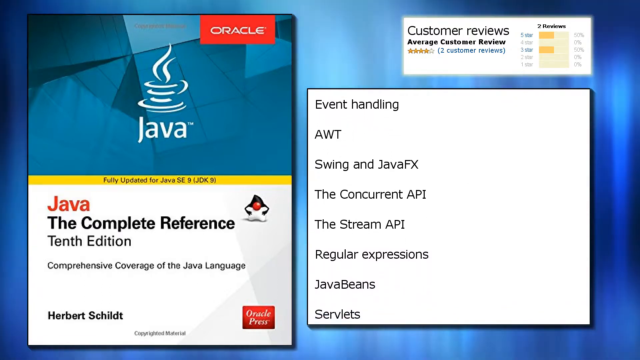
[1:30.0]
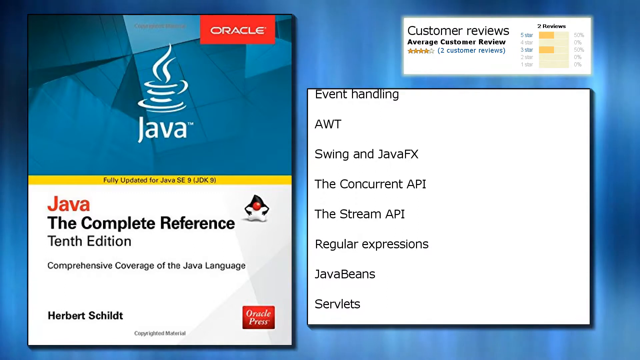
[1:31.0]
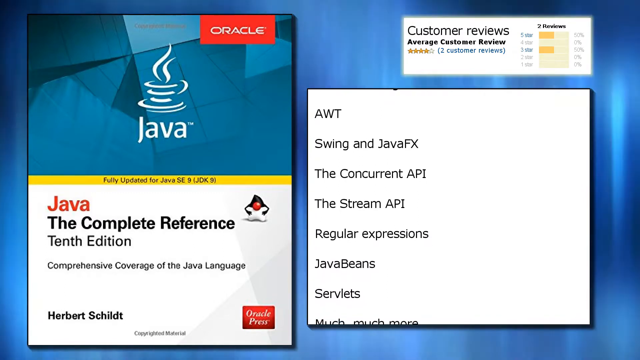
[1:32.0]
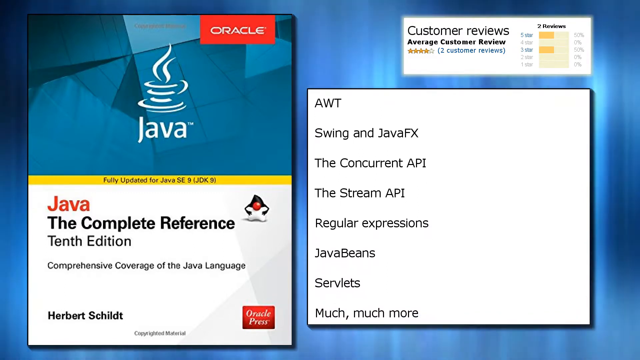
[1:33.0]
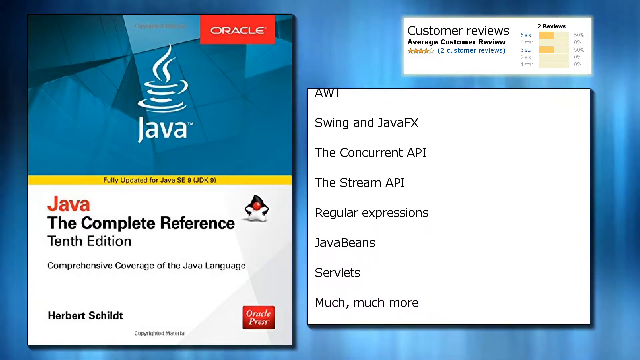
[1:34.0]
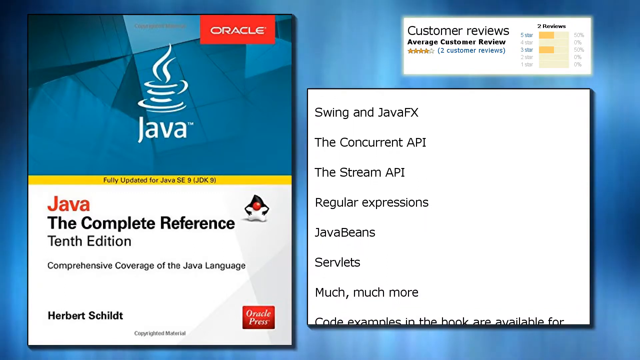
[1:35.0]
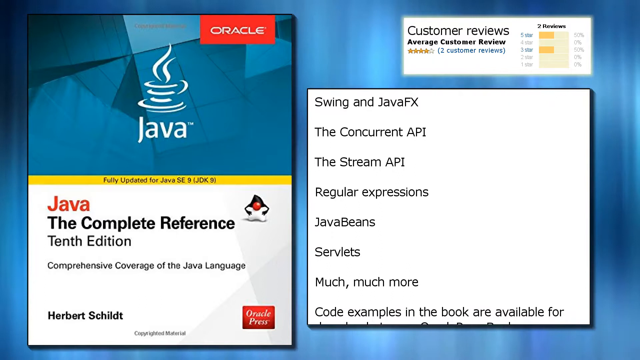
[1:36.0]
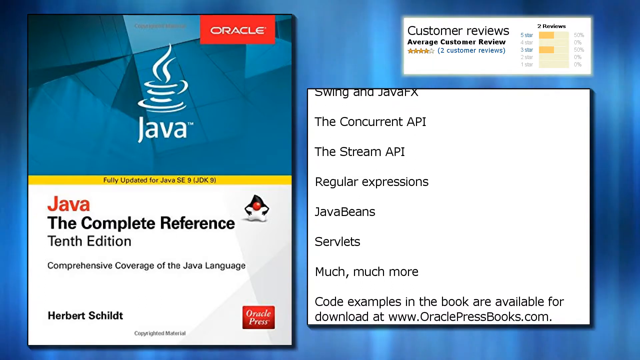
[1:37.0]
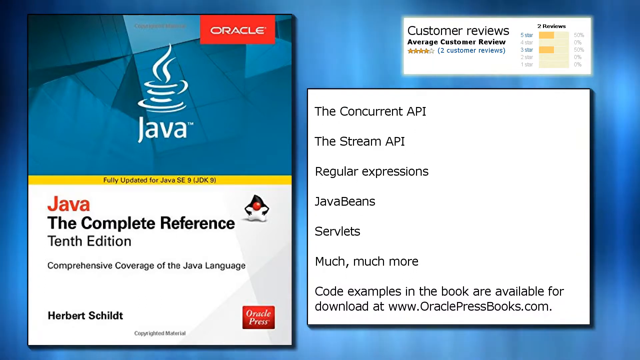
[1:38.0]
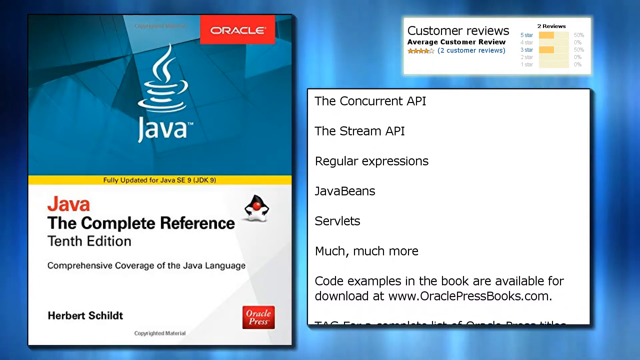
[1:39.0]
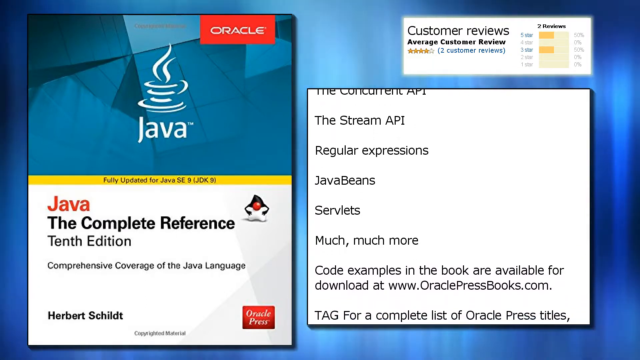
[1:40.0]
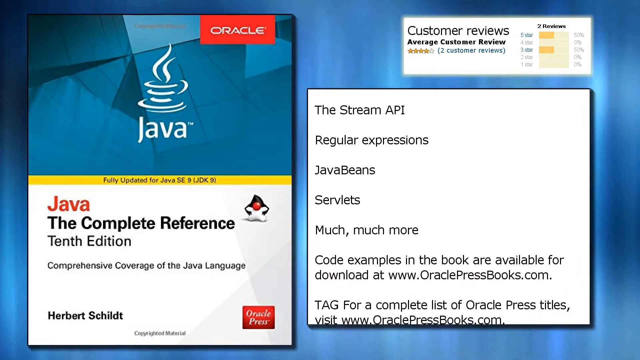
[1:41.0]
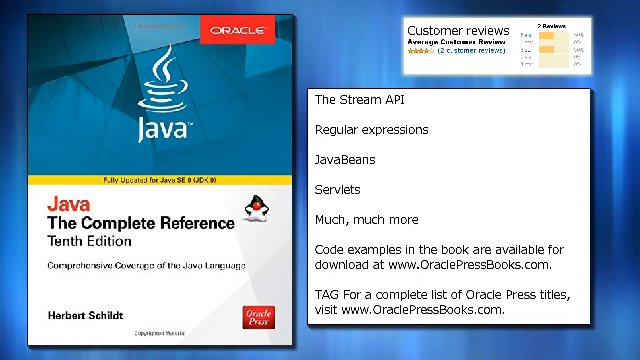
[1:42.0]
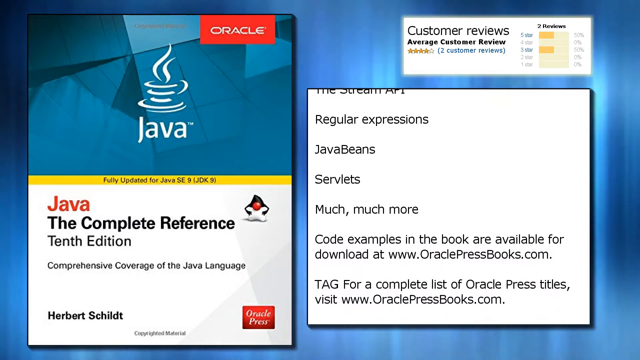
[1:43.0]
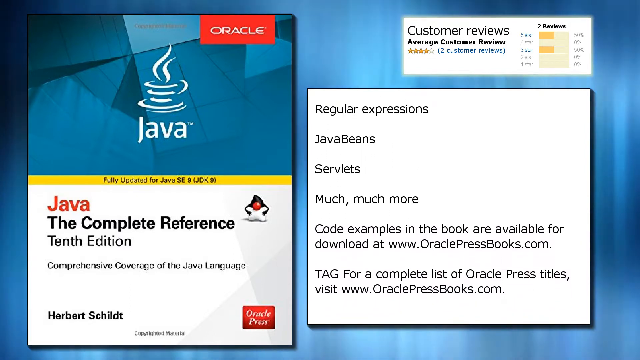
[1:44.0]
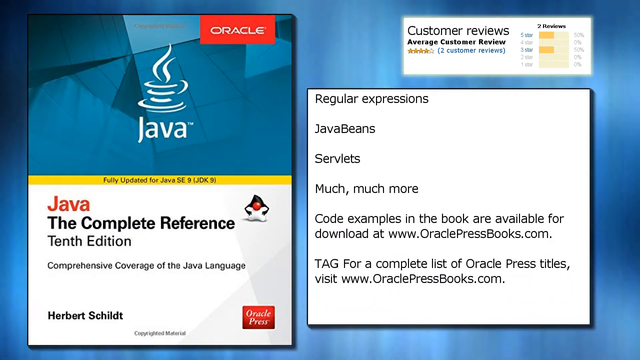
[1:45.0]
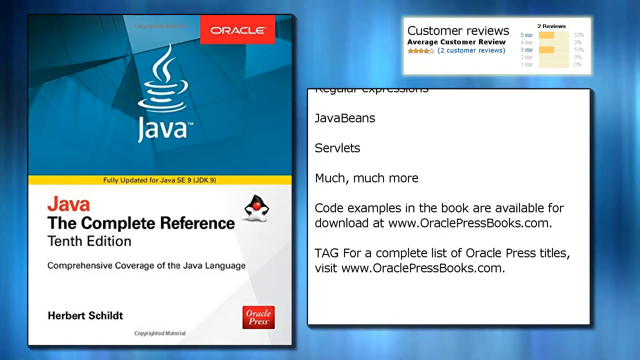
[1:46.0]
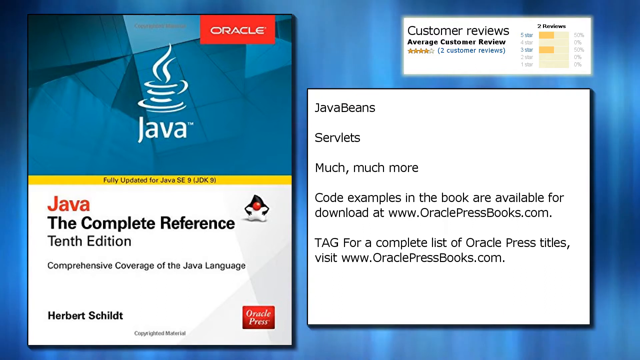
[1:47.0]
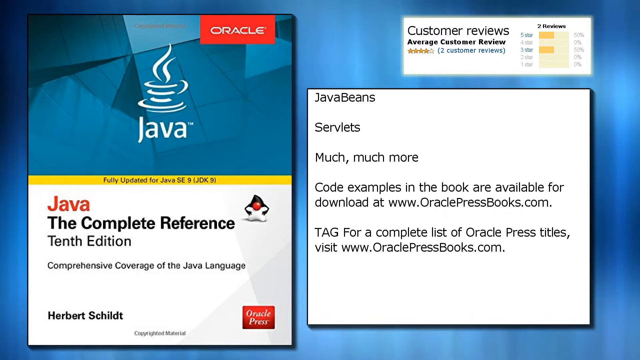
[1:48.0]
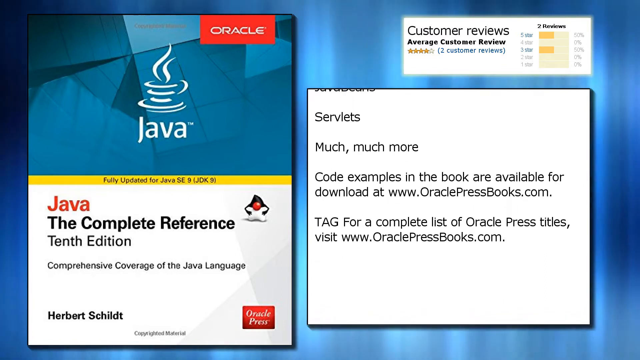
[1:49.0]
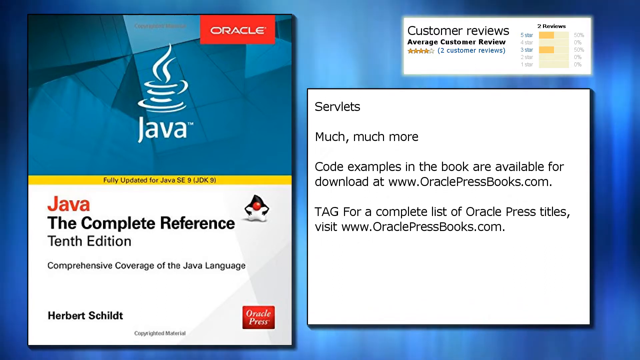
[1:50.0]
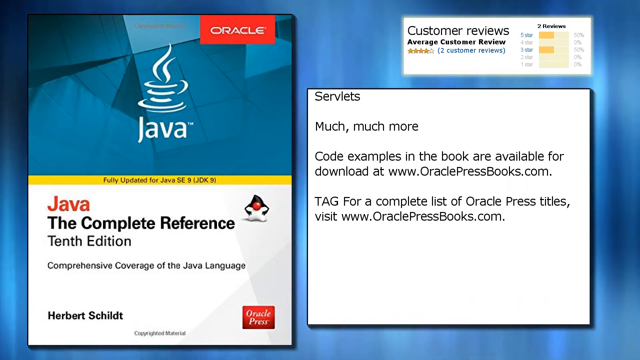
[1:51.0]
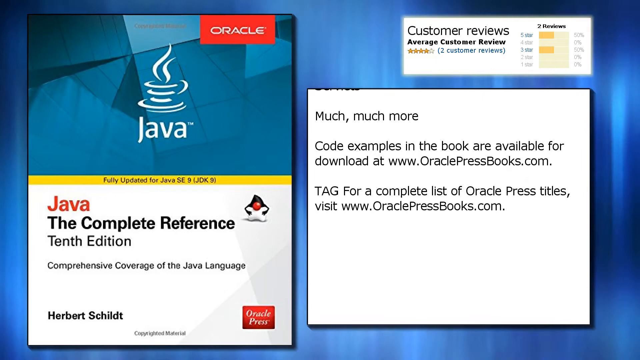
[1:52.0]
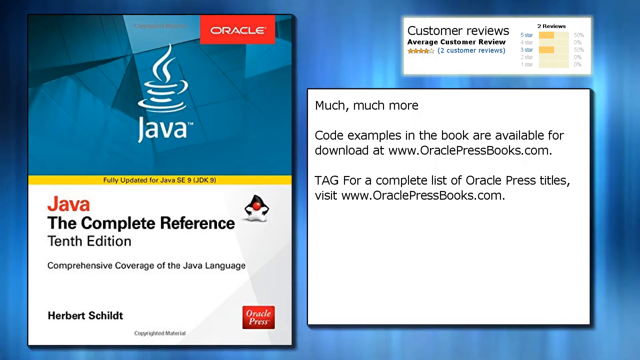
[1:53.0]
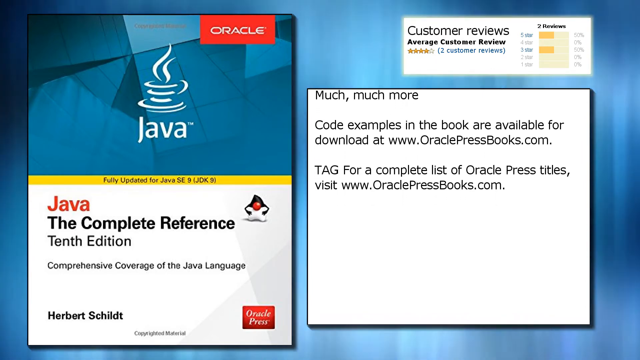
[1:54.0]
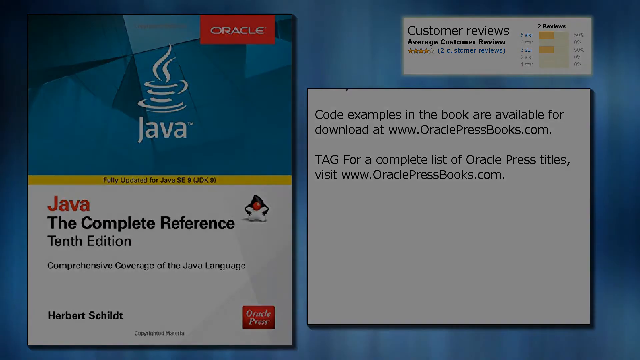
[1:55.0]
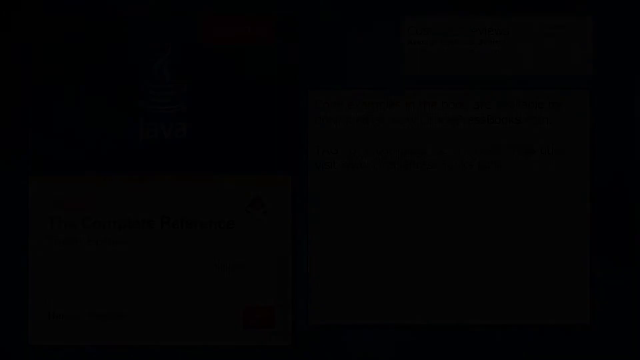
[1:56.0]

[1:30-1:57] The blue background design keeps moving, similar to the movement of the aurora lights. The customer reviews and the Java Complete Reference 10th edition booklet by Oracle on the left side of the screen show no movement. More information keeps scrolling up the screen in the white square on the right until it reaches the bottom, where the information says that code examples from the book are available for download at their website and gives the location to view a complete list of Oracle Press titles on their website. After the text keeps scrolling up, the screen fades to black.